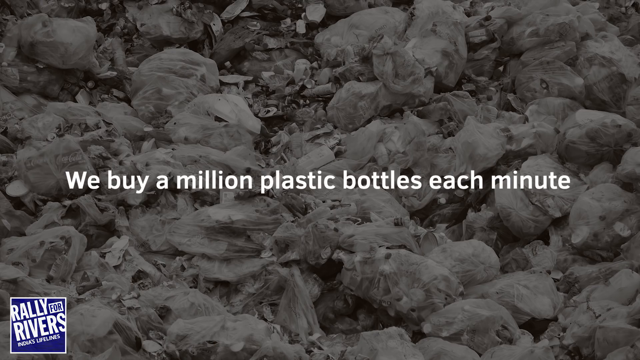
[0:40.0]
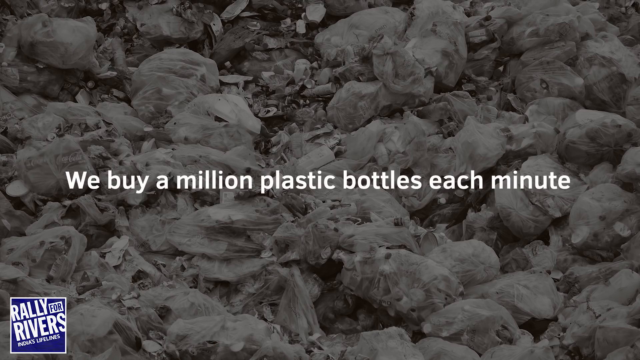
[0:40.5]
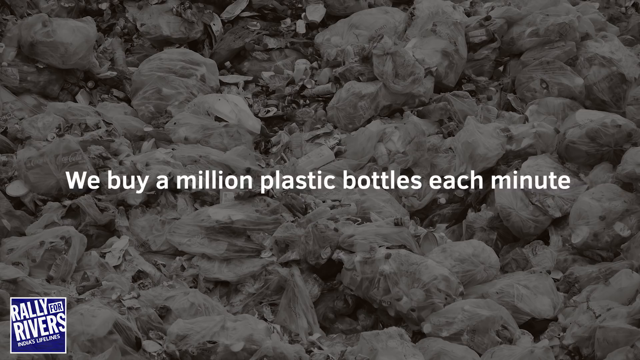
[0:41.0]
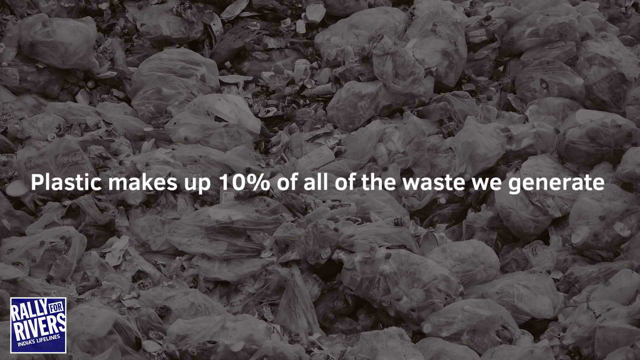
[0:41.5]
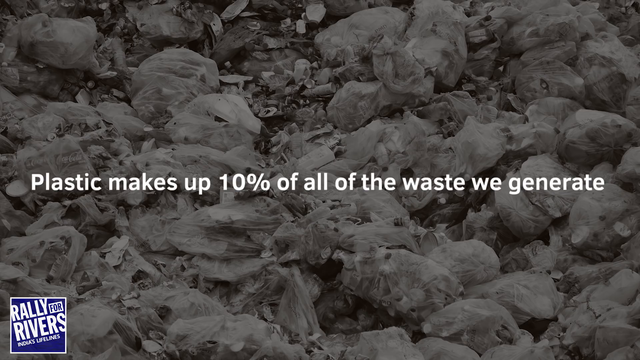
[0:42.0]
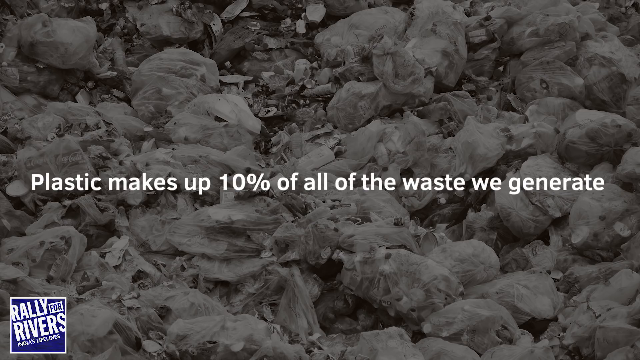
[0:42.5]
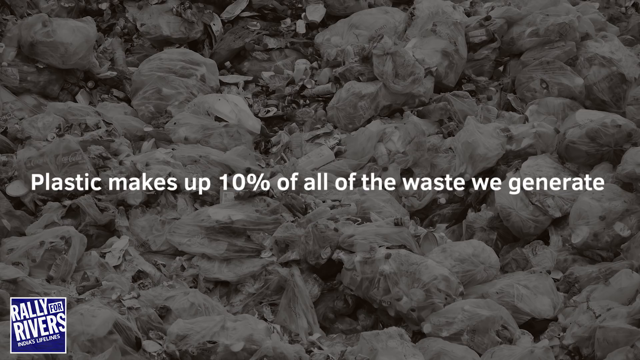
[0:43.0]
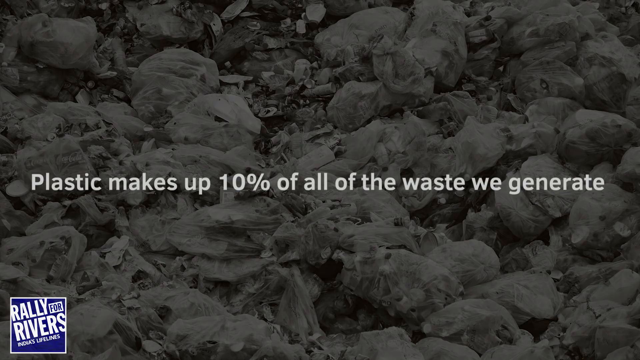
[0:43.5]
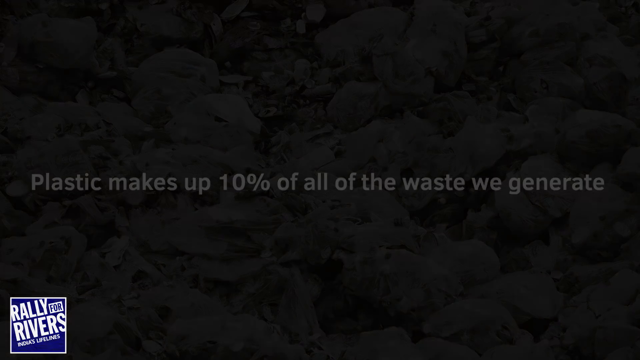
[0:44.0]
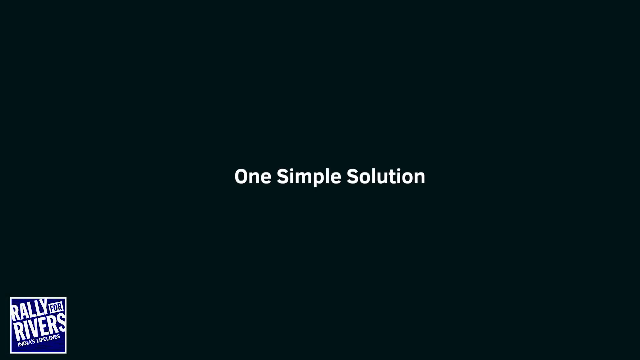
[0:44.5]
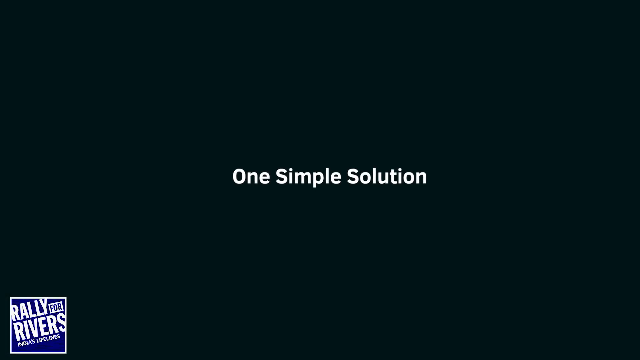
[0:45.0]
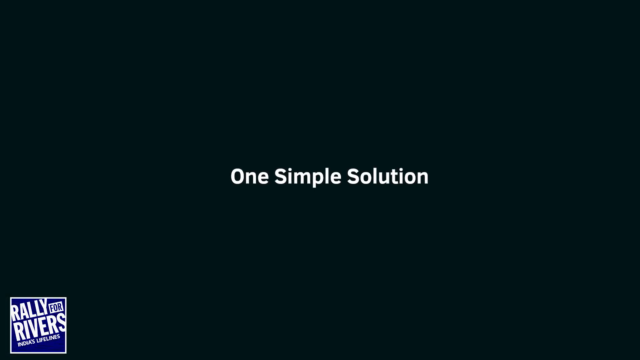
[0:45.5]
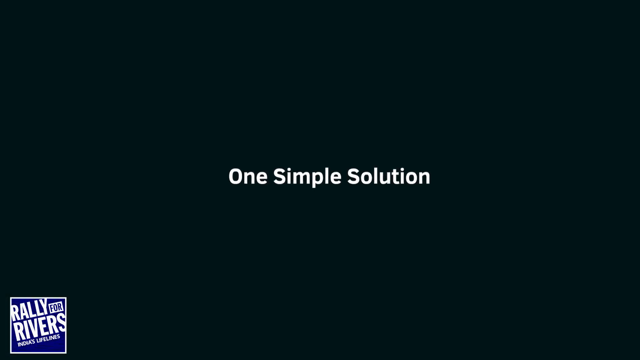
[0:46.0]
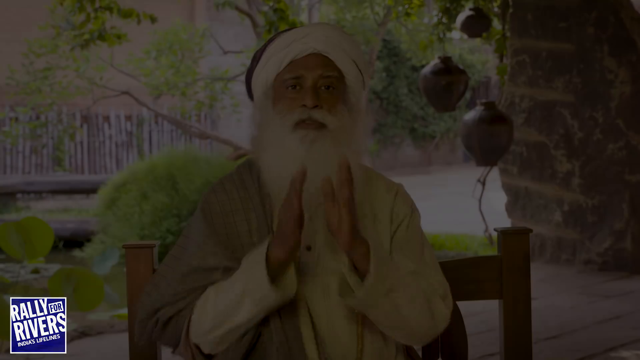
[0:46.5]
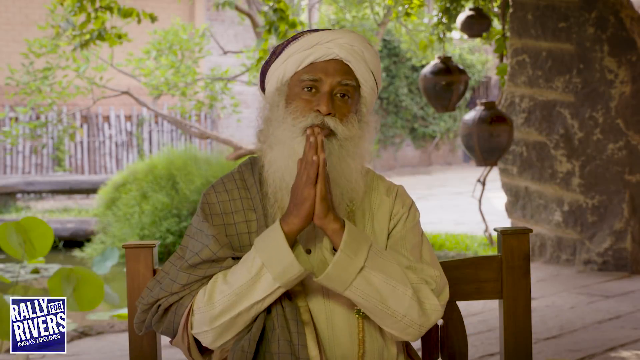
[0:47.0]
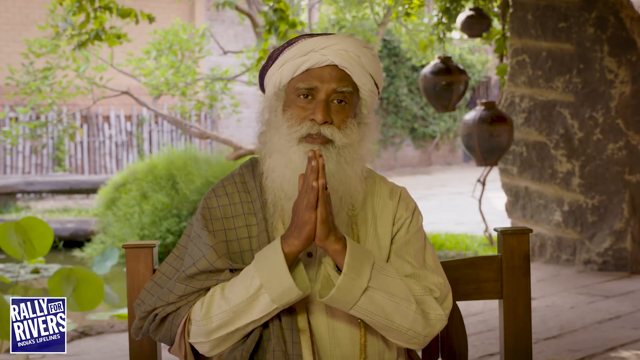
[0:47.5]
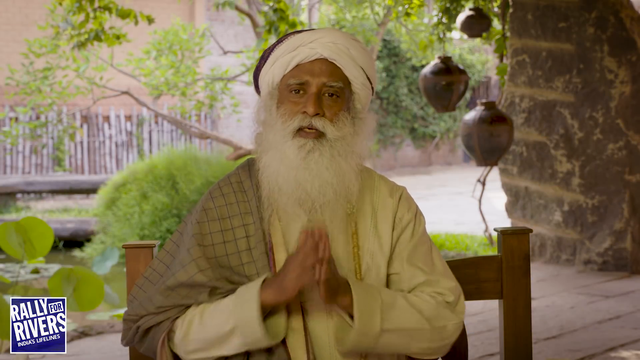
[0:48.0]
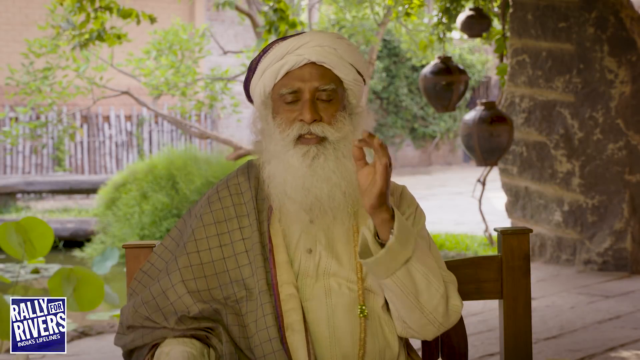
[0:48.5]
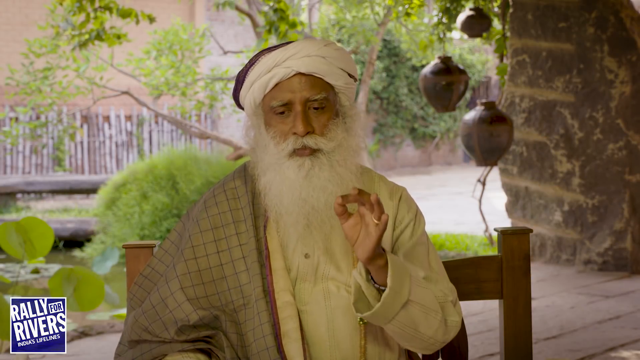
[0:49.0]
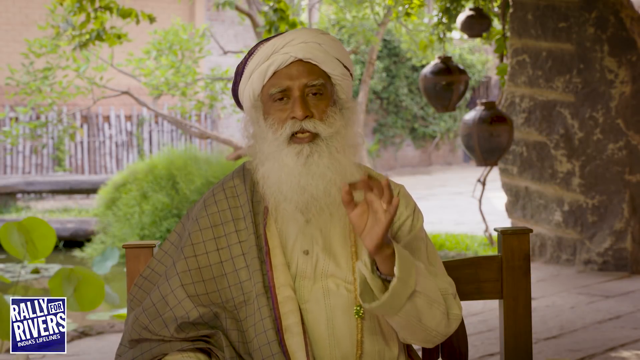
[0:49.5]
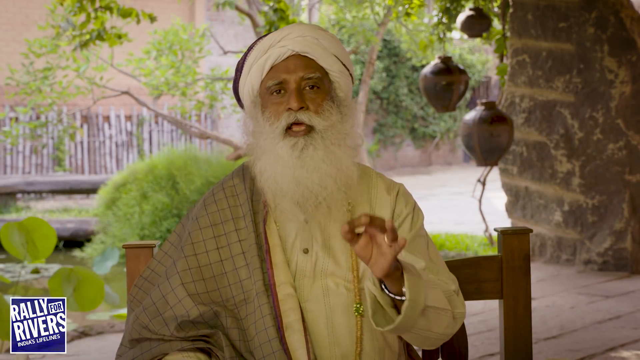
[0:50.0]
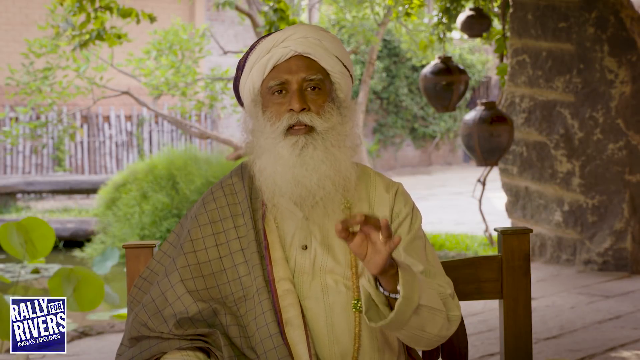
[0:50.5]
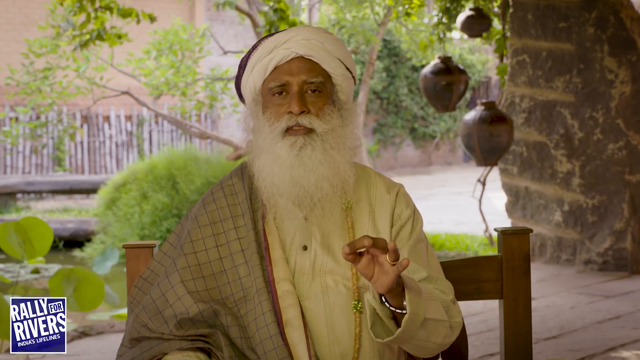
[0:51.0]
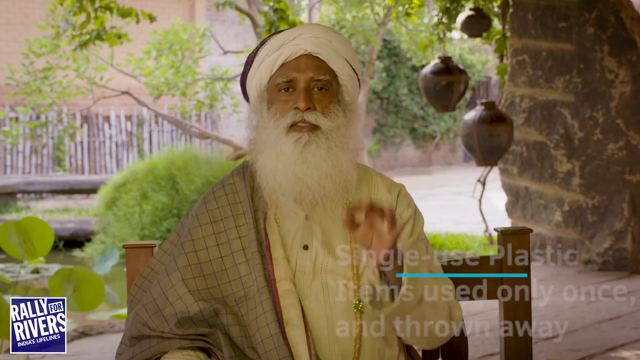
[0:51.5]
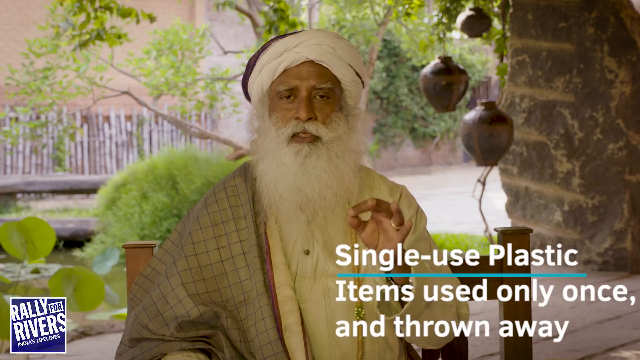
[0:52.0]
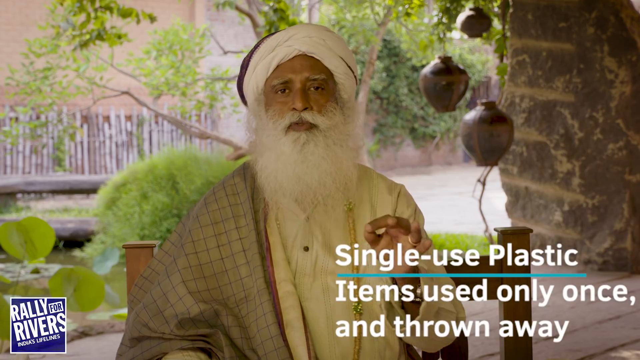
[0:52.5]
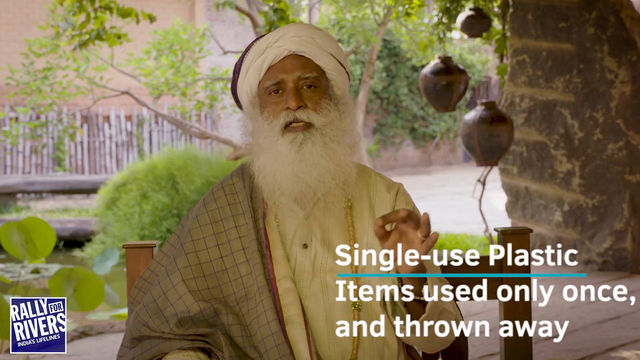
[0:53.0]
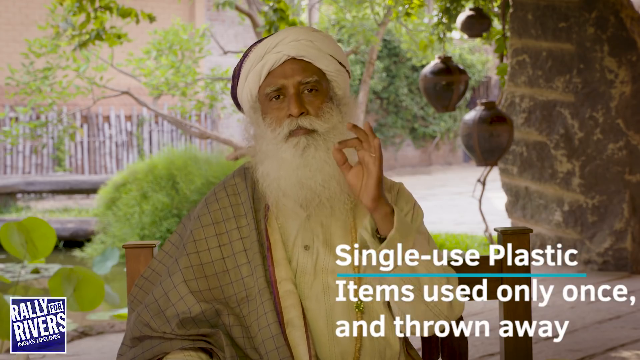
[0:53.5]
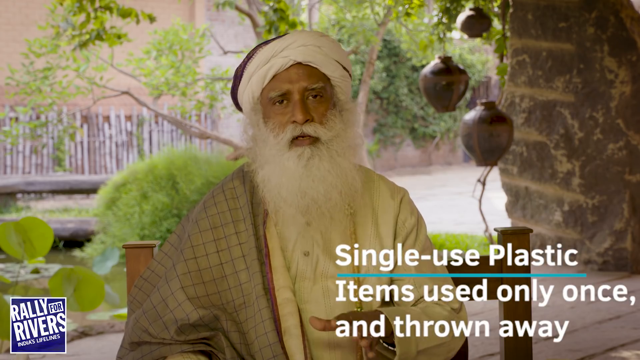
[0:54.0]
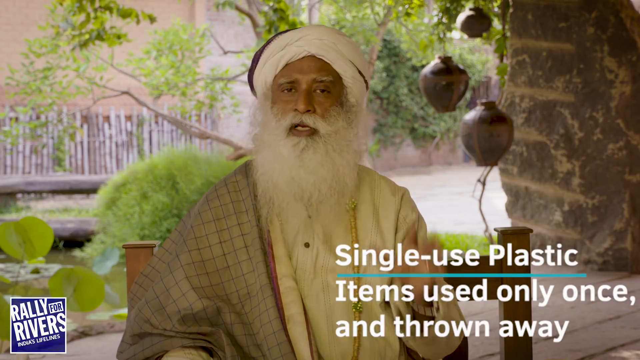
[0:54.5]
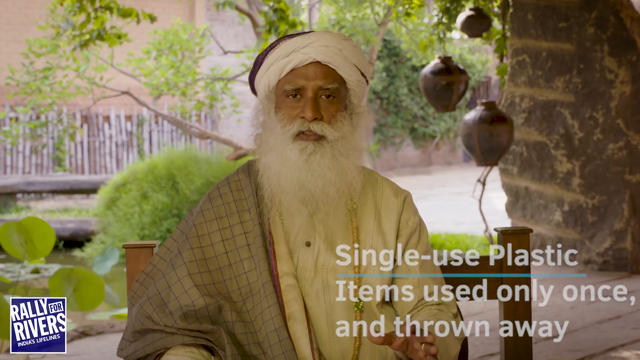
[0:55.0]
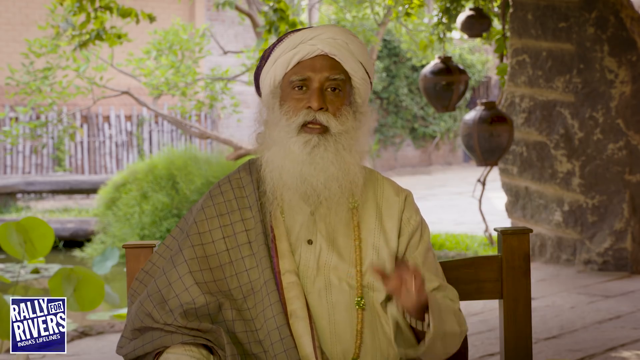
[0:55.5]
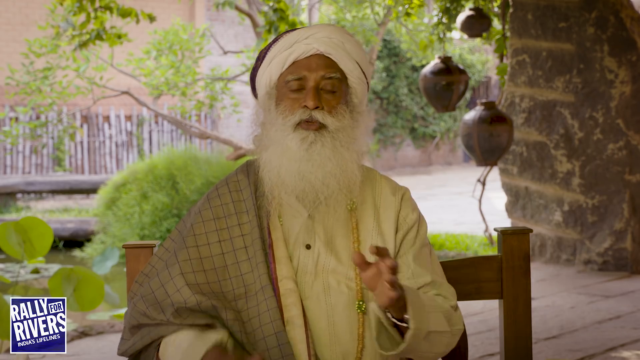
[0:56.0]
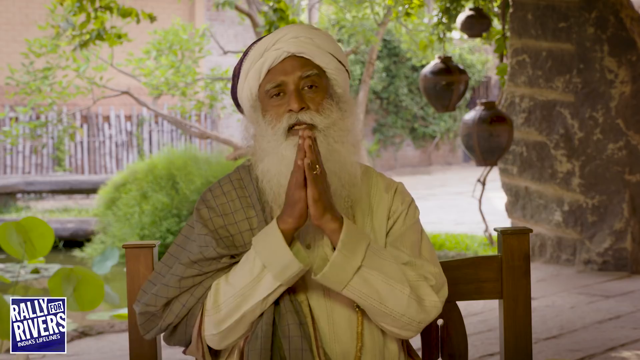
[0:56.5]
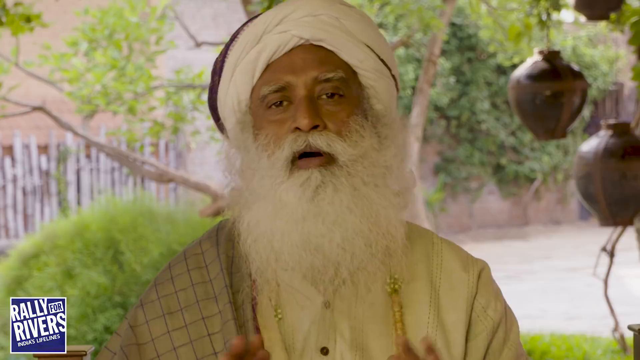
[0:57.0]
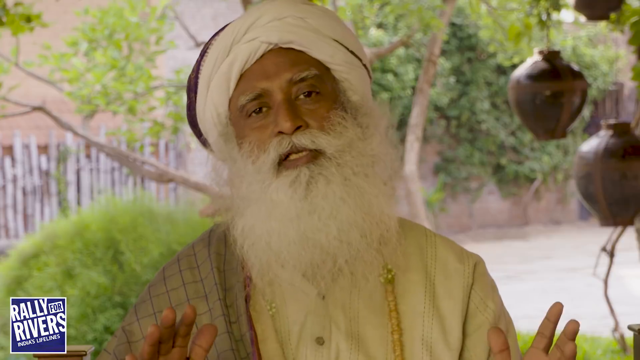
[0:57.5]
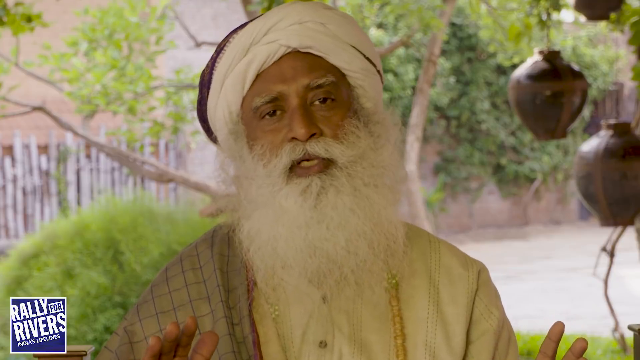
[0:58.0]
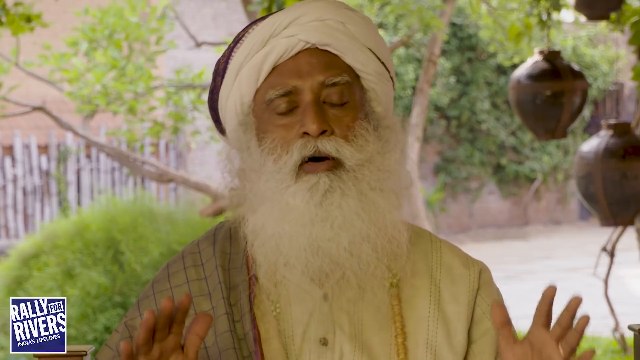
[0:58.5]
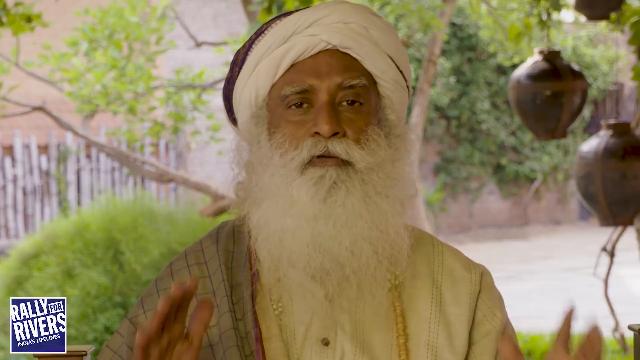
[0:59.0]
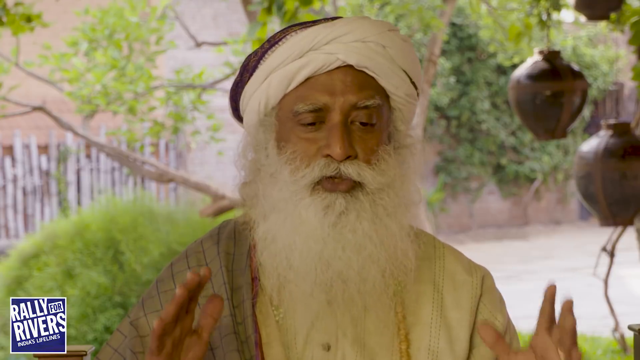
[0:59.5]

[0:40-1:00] A short message appears in the middle of the screen: "we use 500 million plastic bags each year," "we buy a million plastic bottles each year," and "Plastic makes up to 10% of all of the waste we generate," followed by "one simple solution." The man who looks Indian is shown again, with a turban on his head and a long white beard, holding his hands together in a praying gesture.